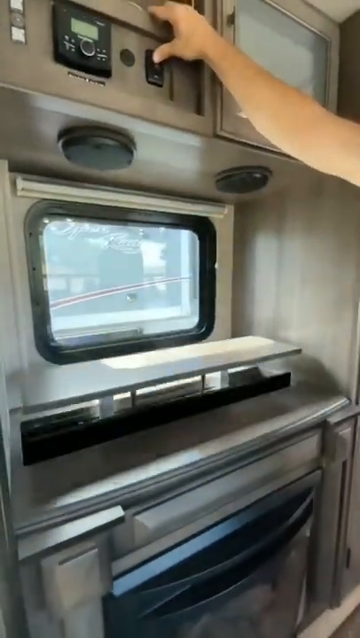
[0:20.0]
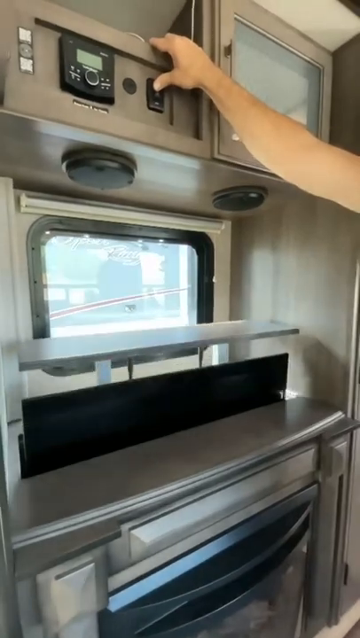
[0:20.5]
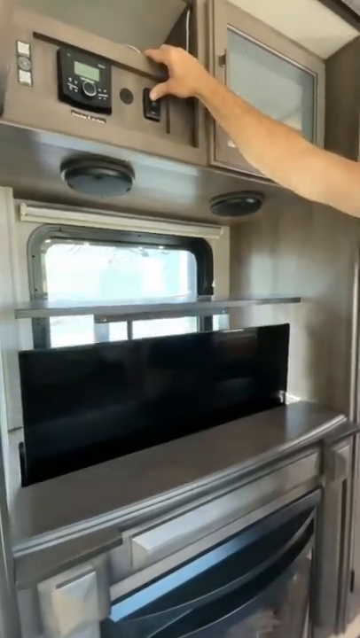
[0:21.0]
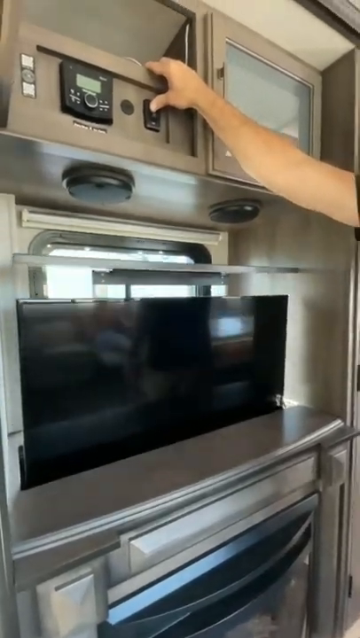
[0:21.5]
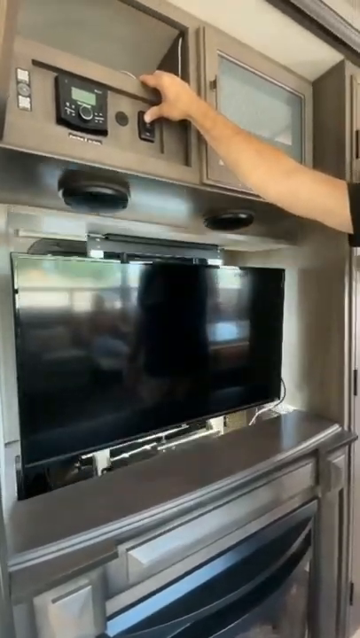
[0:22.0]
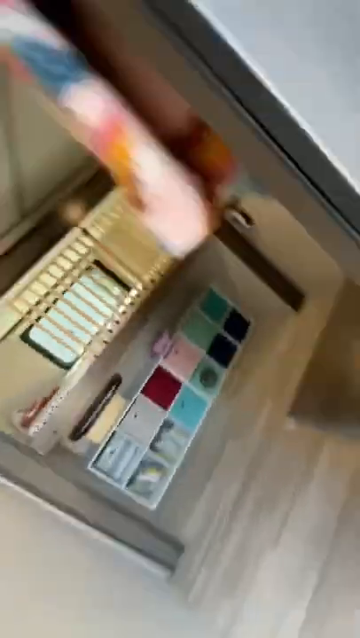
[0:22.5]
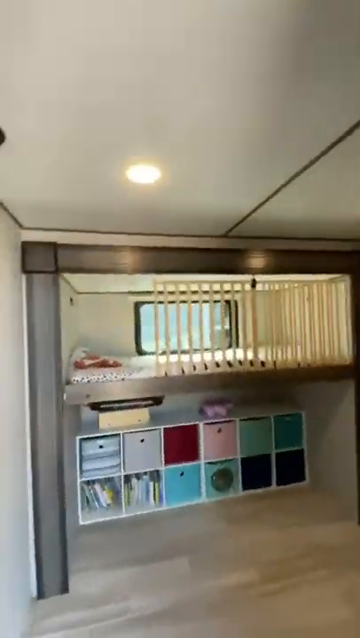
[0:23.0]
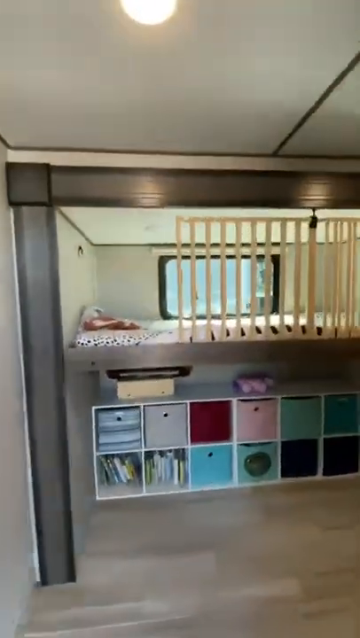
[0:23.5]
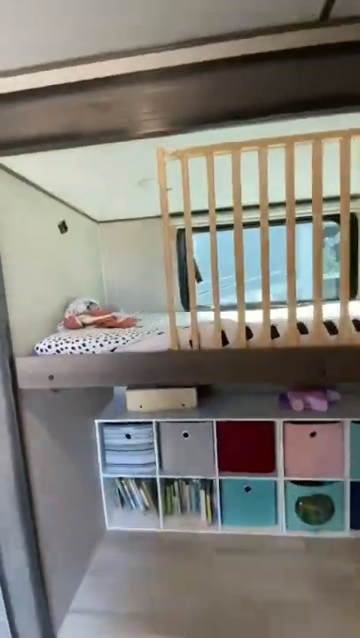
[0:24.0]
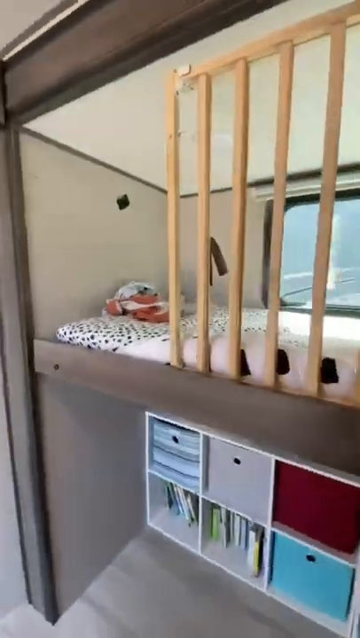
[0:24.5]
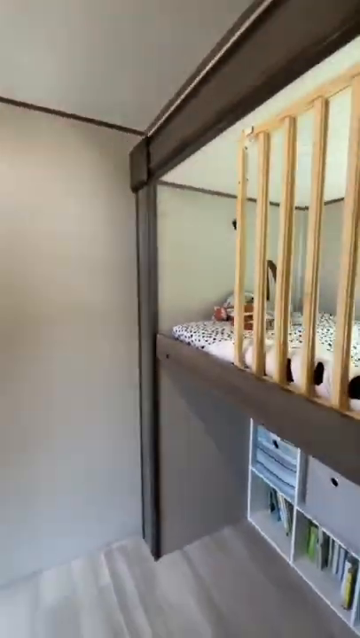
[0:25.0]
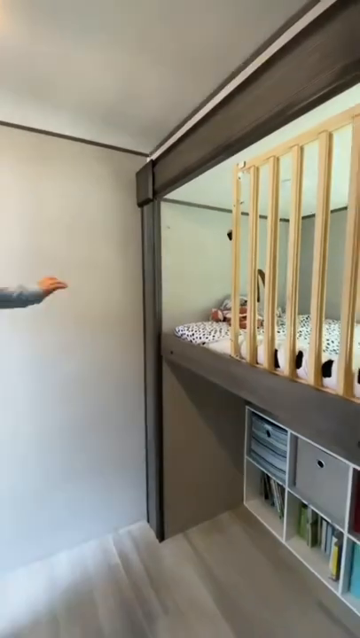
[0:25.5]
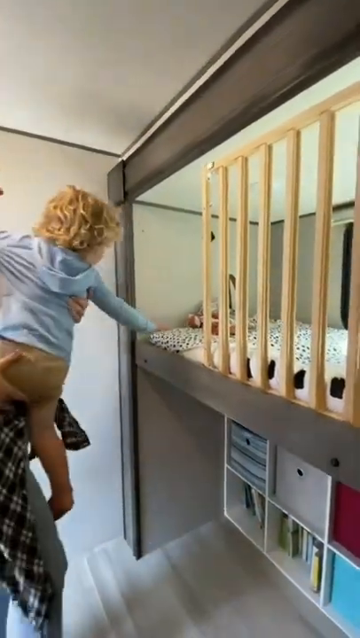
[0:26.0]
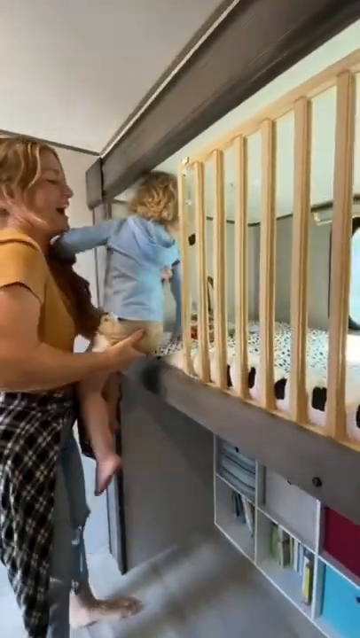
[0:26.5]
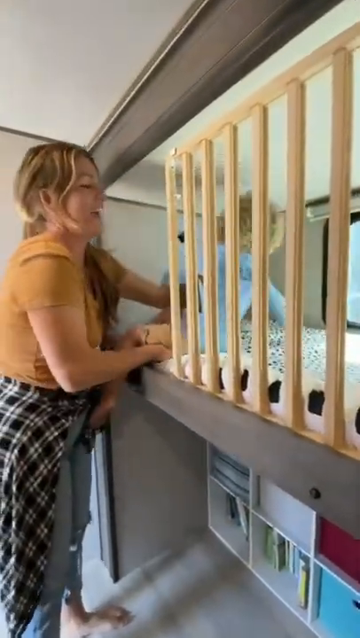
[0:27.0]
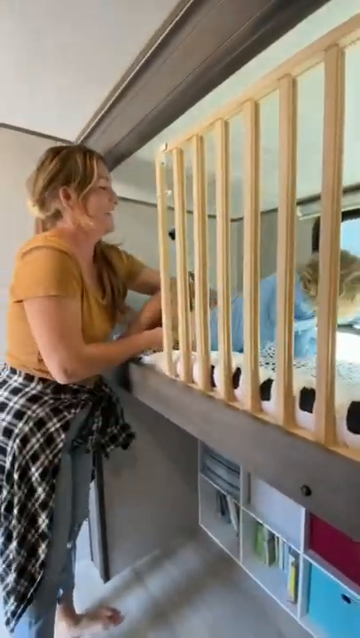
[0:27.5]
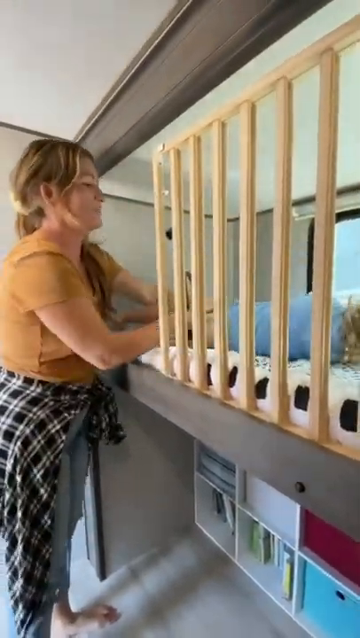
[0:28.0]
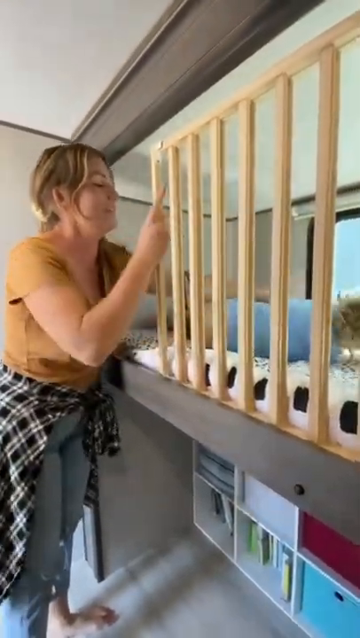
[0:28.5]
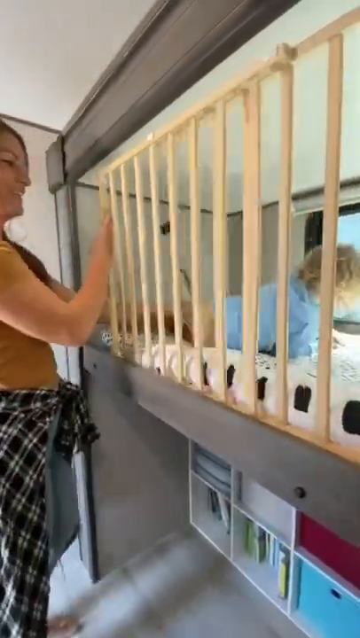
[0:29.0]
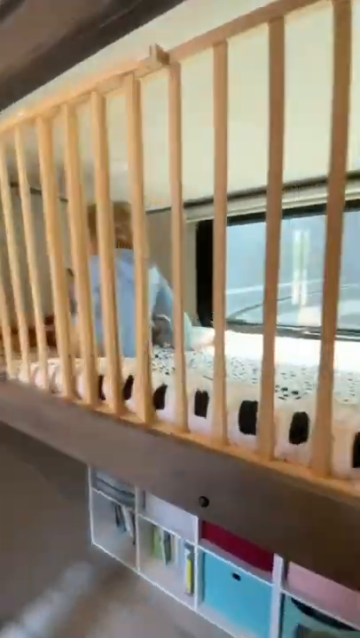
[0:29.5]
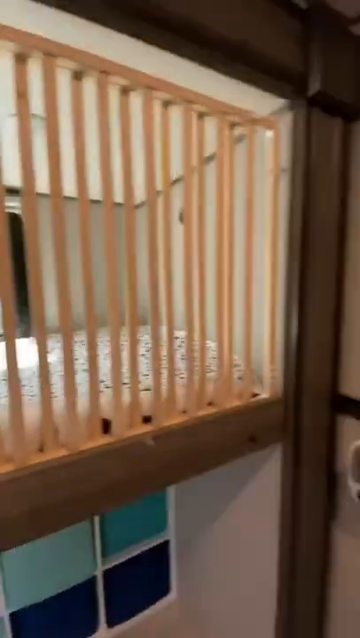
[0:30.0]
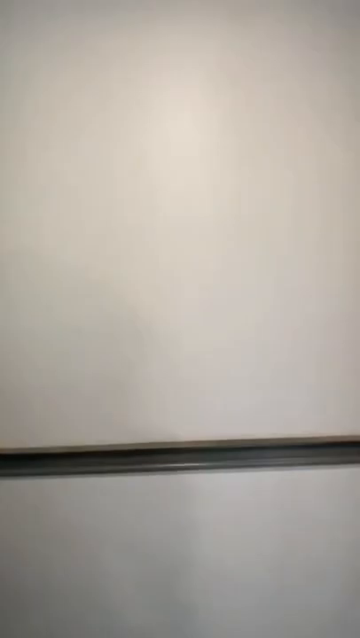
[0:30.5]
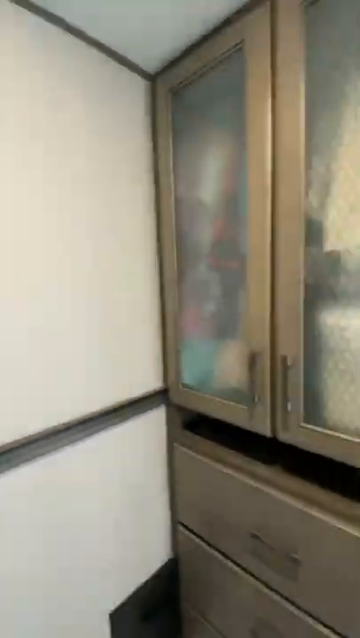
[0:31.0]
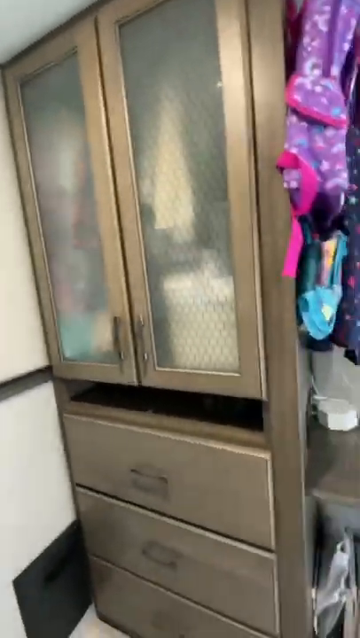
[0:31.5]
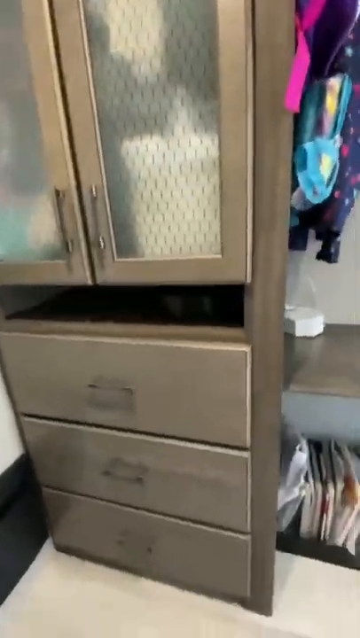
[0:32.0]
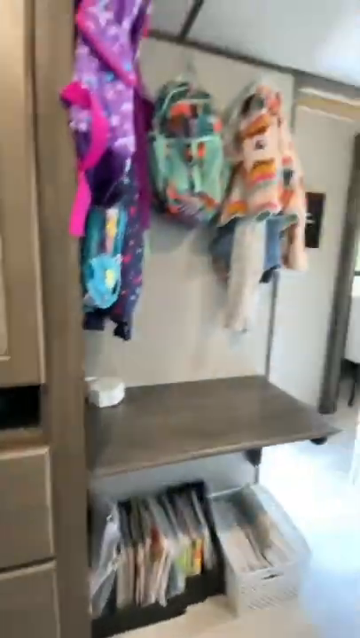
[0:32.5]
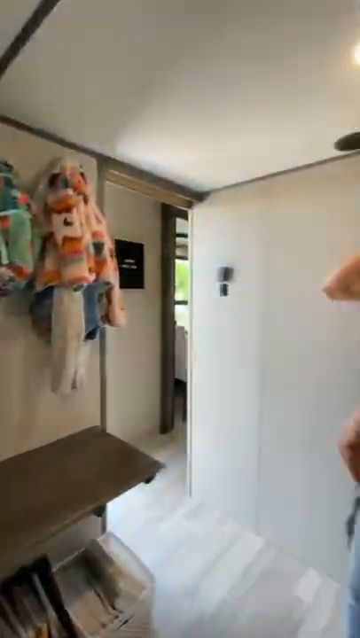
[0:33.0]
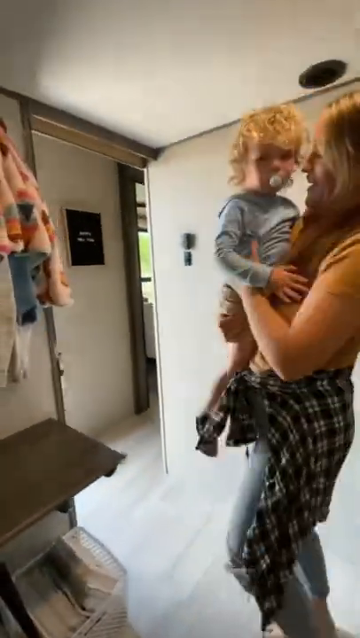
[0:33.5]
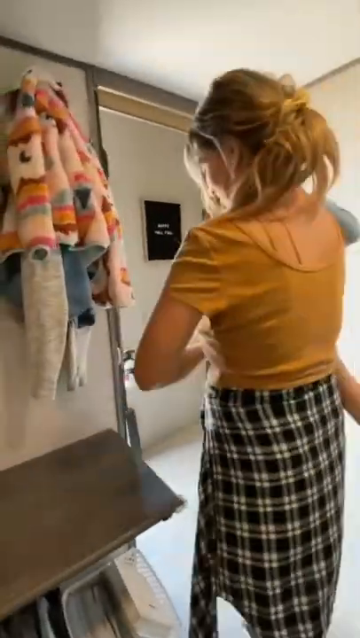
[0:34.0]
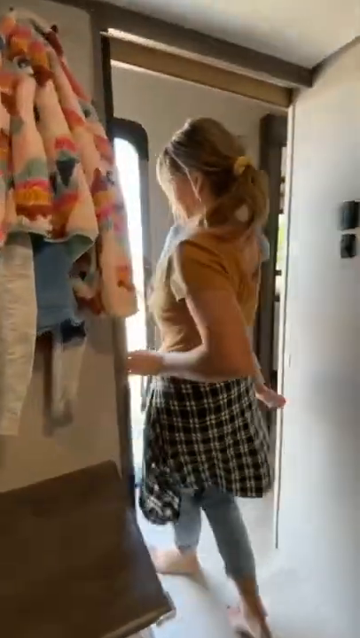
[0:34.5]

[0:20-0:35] She shows a TV that raises up for viewing. There appears to be an elevated crib with rails that slide shut. Dressers are built into the walls, and there are storage bins below. She steps into another room, though which room is unclear. The lady puts her kid in the elevated crib. There are places to hang a coat and a sliding door. The lady wears pants and has her top or jacket tied around her waist by the sleeves, which looks sort of like a skirt from the back; she also wears a tan shirt and has brownish blonde hair. Colorful baby clothes hang on hooks on the wall, and there are shelves in the room. She holds the girl, carrying her on one side with her arm around her, the girl seated a little on her waist.